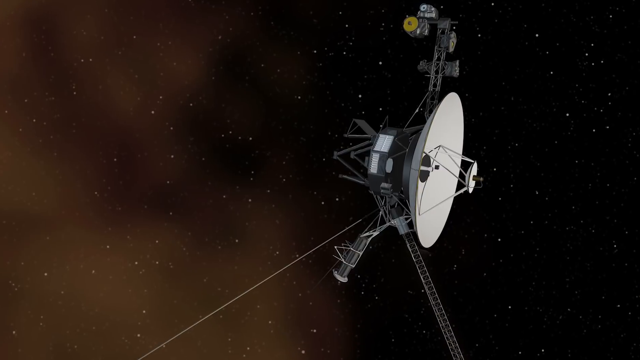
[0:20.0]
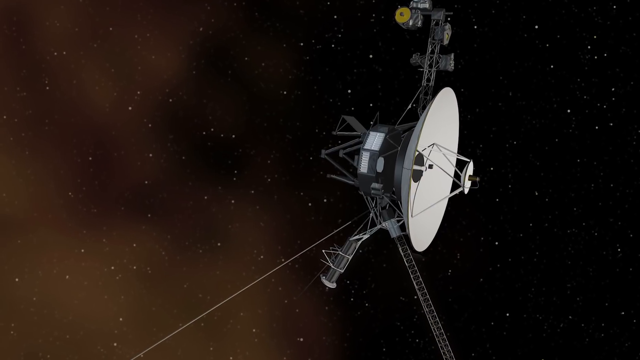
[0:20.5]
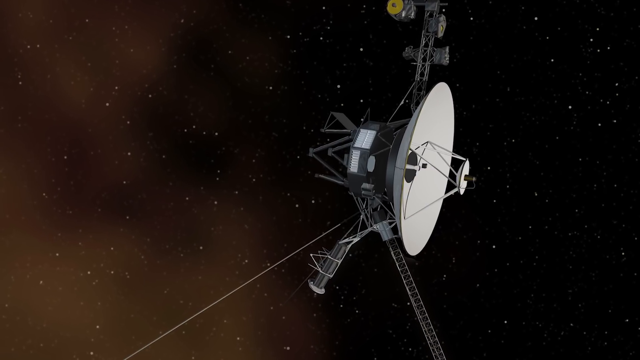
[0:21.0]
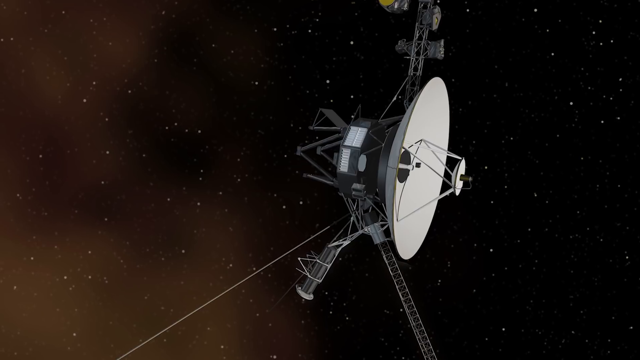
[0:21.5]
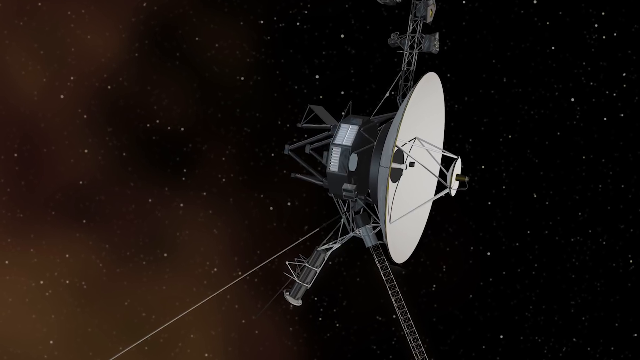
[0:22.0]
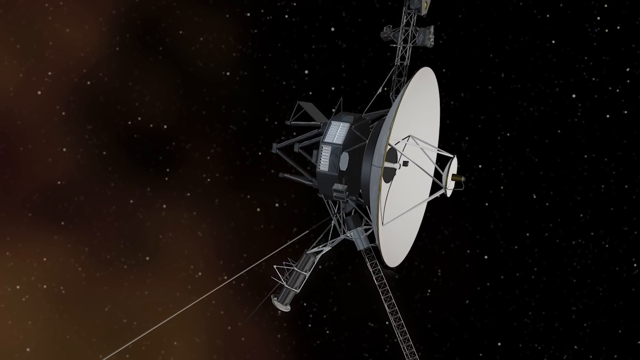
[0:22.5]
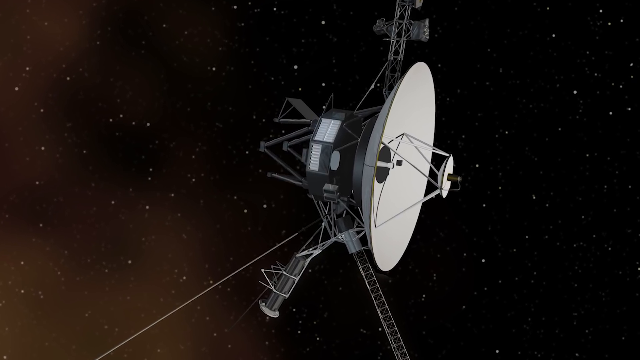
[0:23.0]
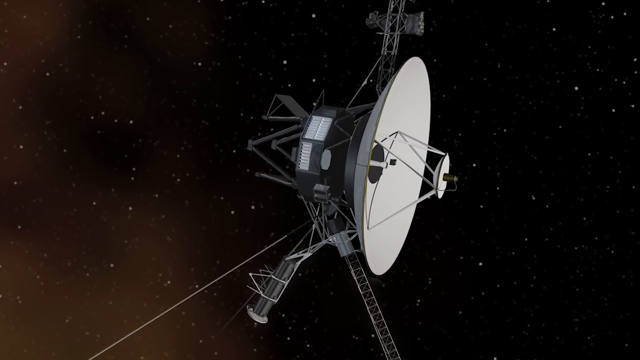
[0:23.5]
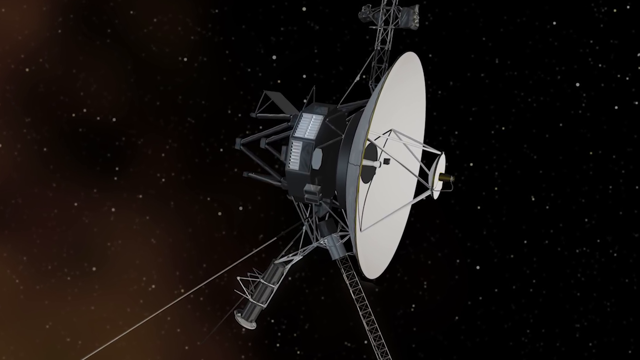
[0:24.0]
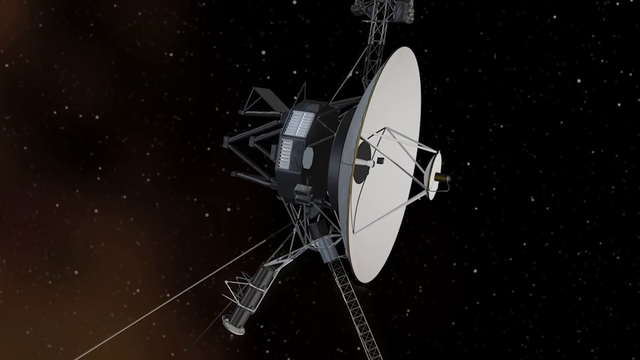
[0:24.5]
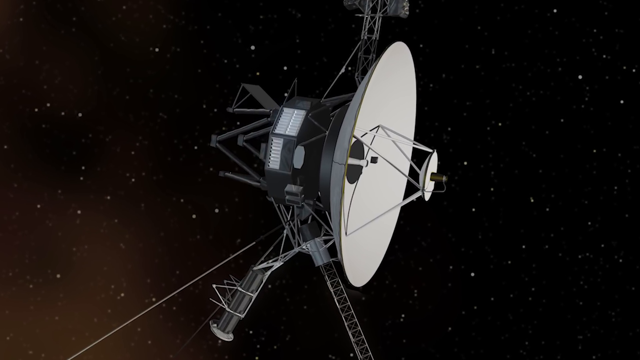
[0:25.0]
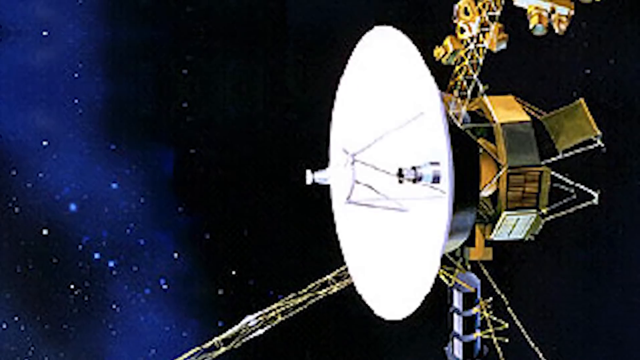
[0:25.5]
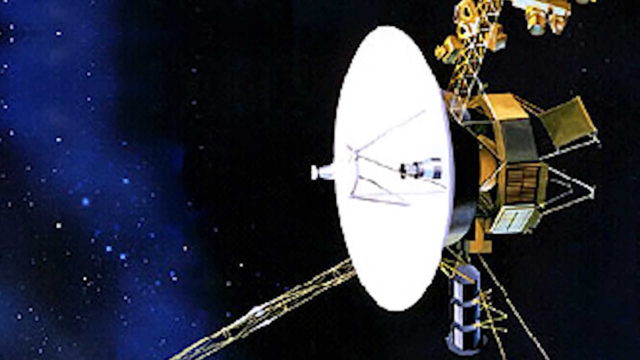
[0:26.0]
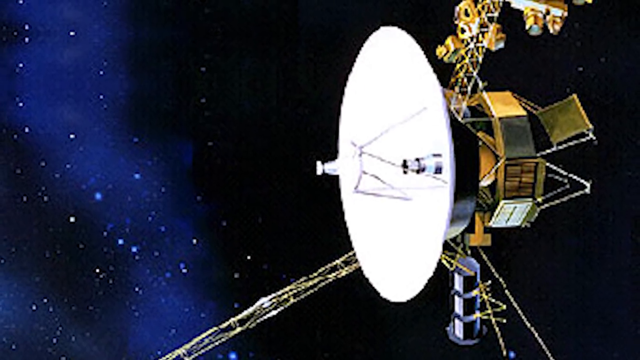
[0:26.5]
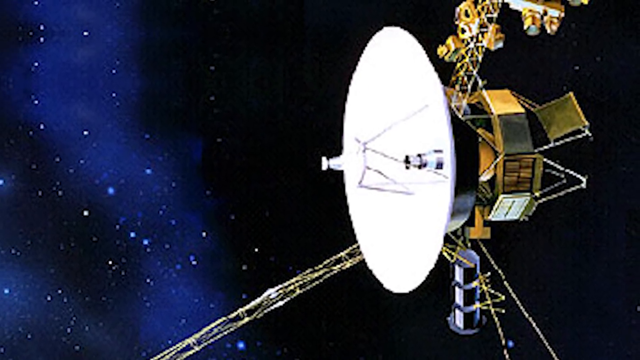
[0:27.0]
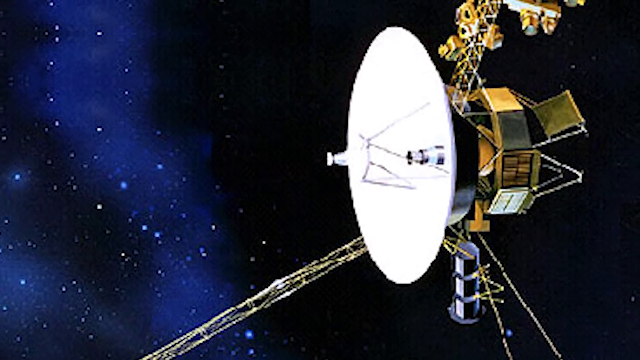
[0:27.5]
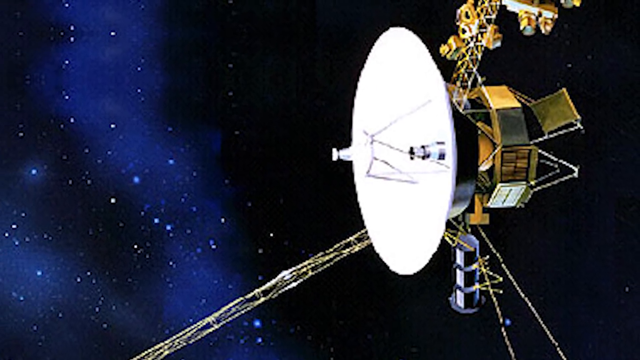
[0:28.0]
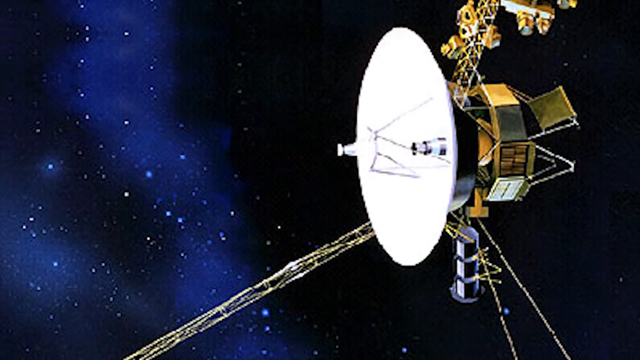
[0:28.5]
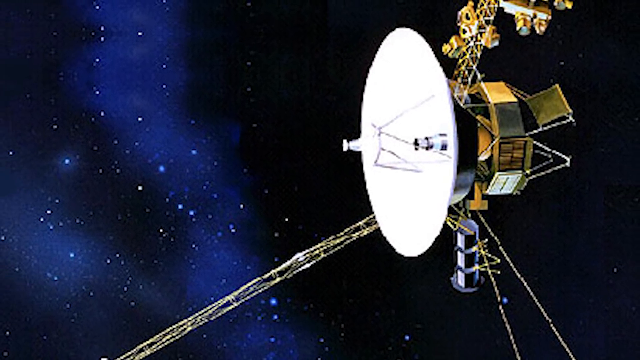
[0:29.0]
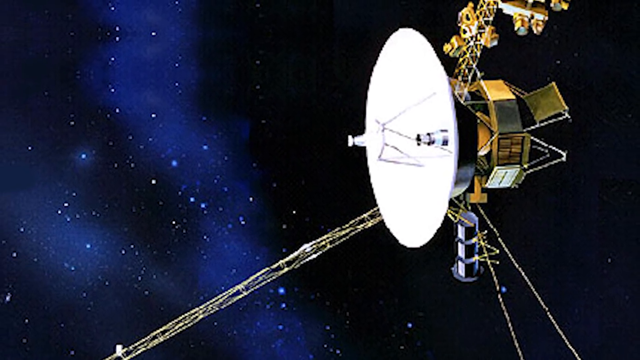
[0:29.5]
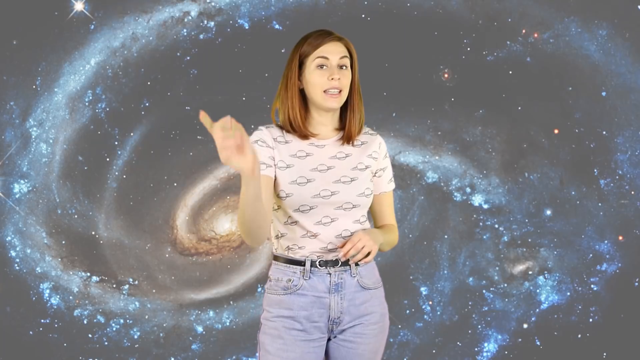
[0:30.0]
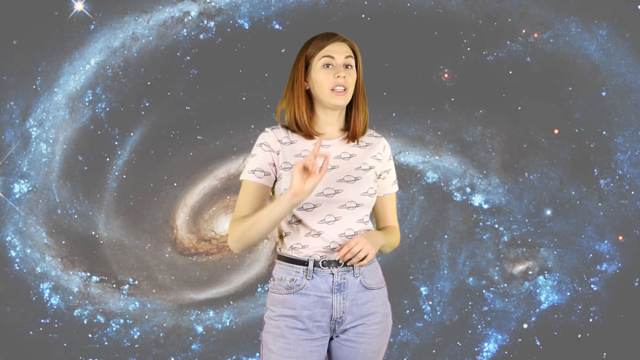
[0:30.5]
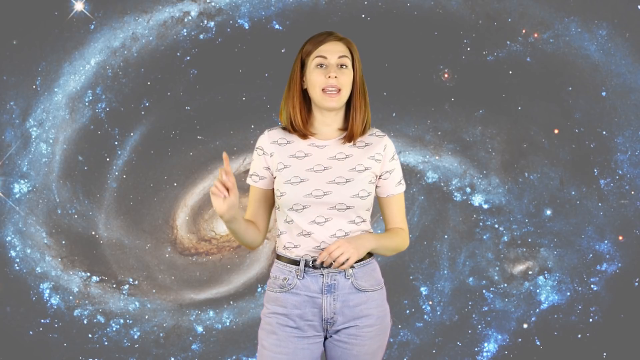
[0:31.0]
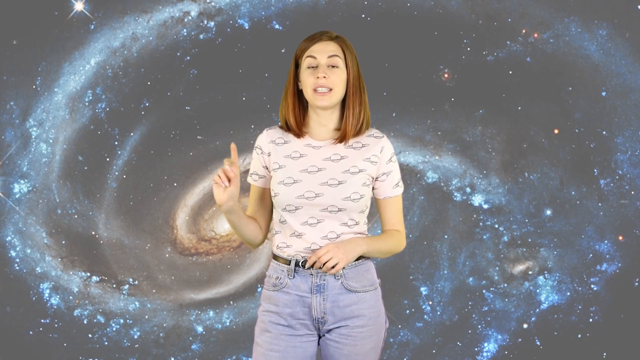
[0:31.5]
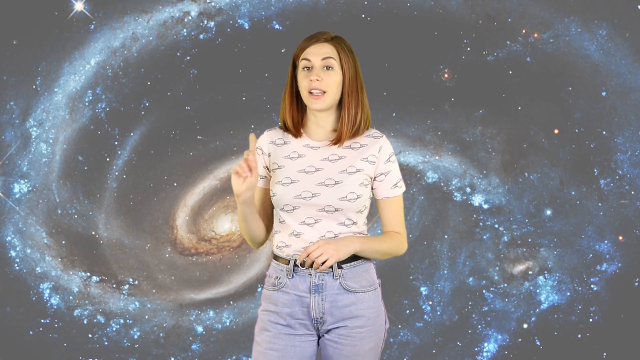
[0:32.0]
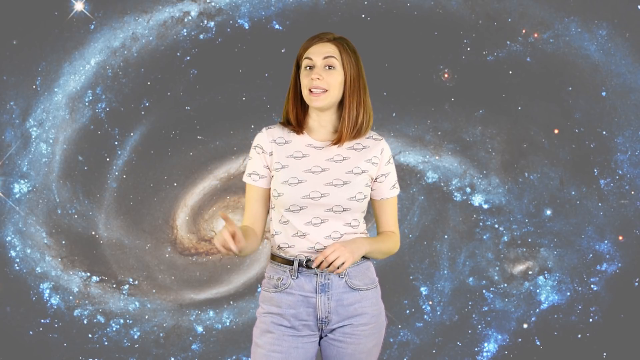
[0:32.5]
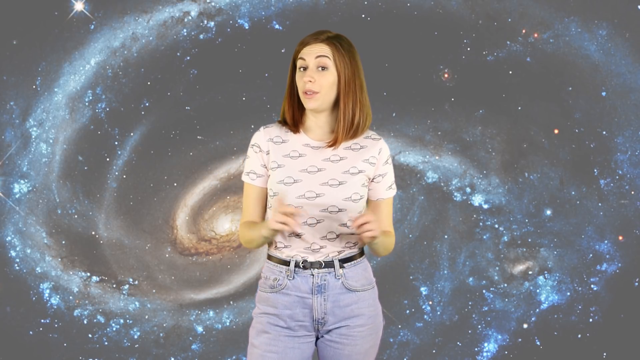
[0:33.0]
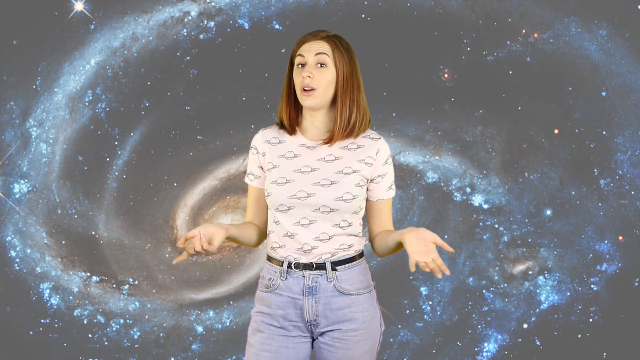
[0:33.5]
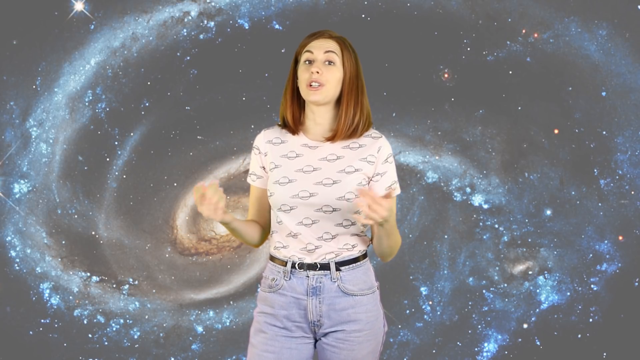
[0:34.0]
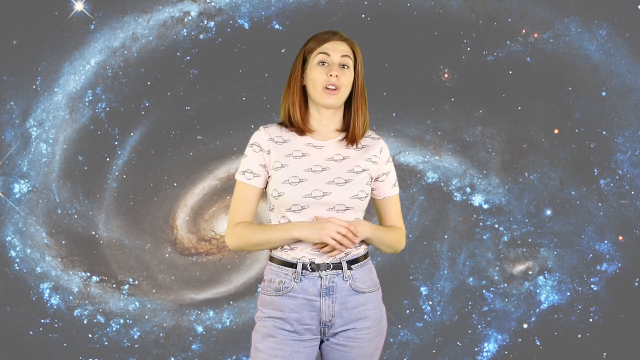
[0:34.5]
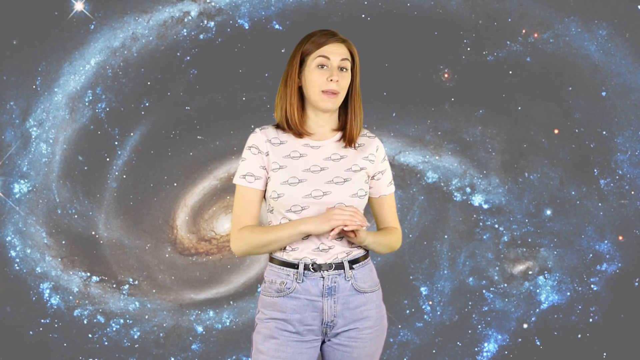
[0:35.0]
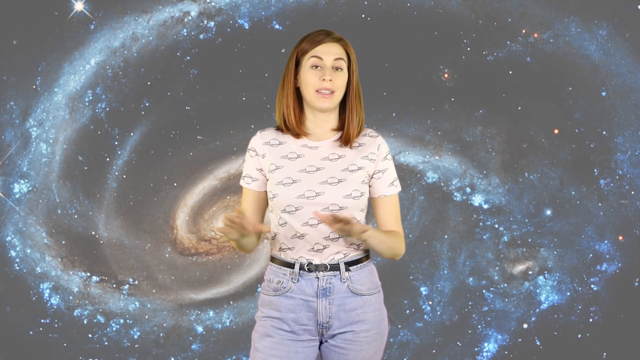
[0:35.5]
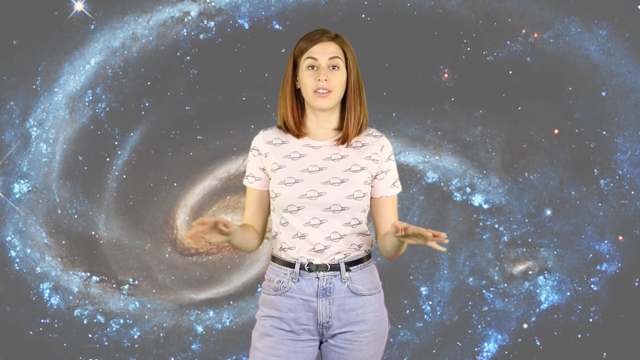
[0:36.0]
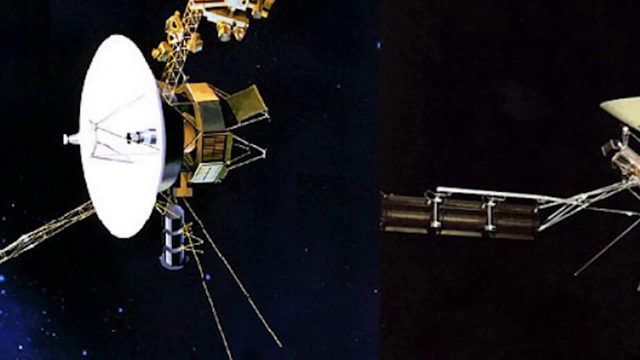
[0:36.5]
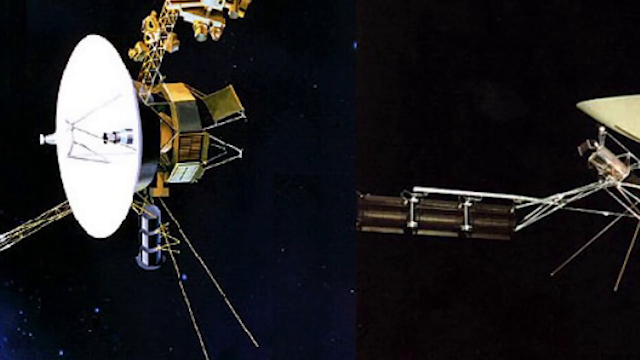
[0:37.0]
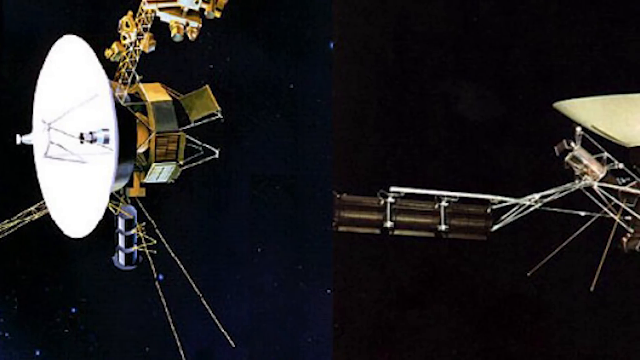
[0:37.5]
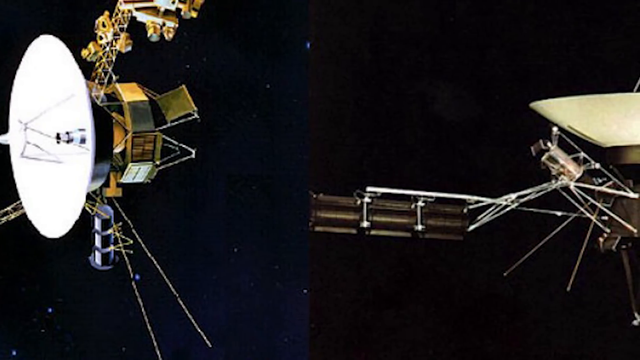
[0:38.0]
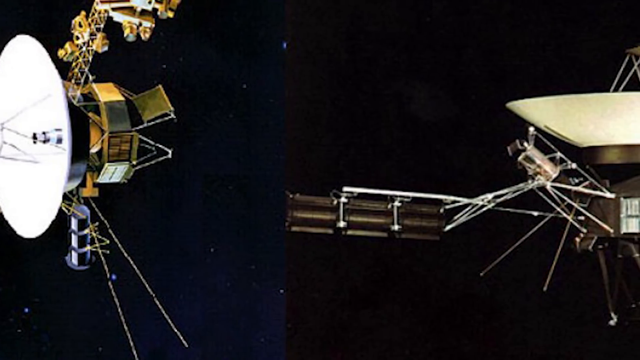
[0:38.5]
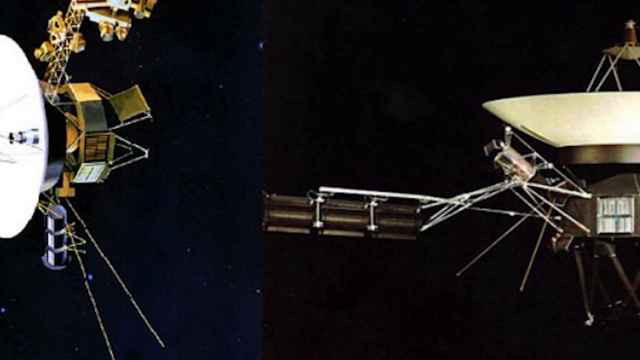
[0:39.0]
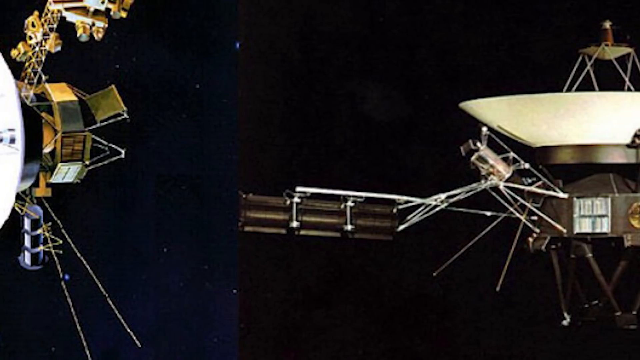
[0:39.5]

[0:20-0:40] A satellite on the right side faces right, and the view zooms inward toward it. Behind it is space: very dark on the right side and what looks like a light brown color on the left, with stars spread throughout the background. A different image shows another satellite on the right side, facing left. The image changes to the woman in the center, facing the viewer and talking. She points her right finger upward, spreads out her arms, brings her hands together while looking at the viewer, and spreads out her arms again. A split screen then shows two different satellites: the one on the left faces left, and the one on the right is a different type. The camera view shifts toward the right, showing the satellite on the right, a different model.